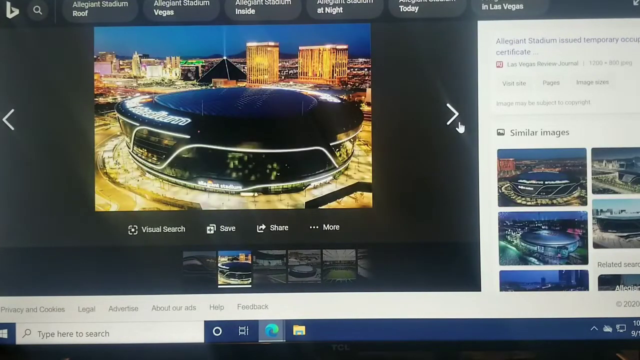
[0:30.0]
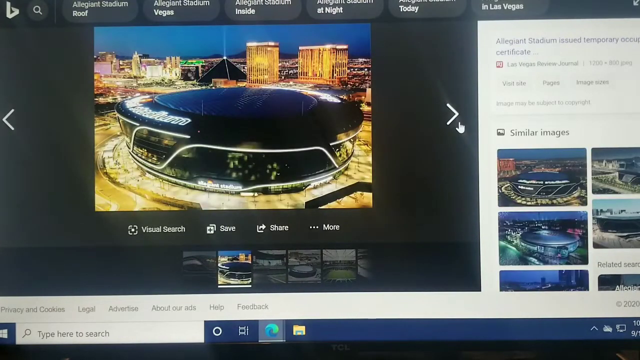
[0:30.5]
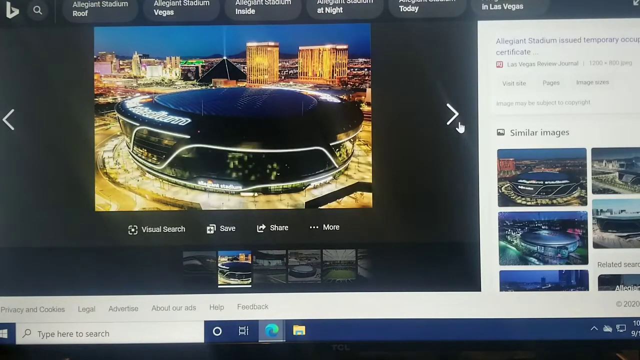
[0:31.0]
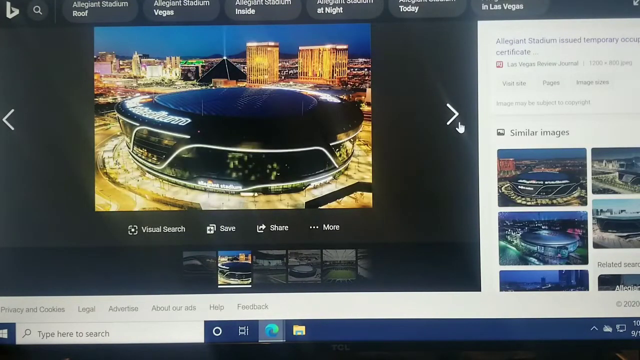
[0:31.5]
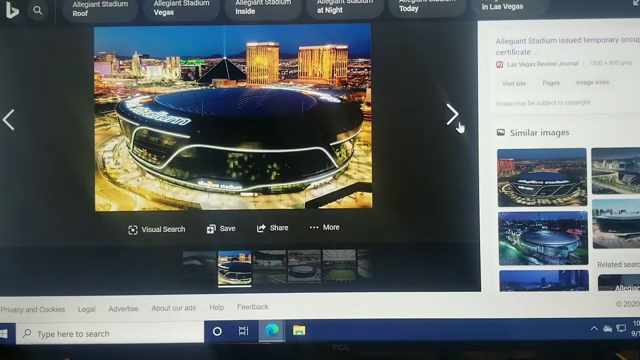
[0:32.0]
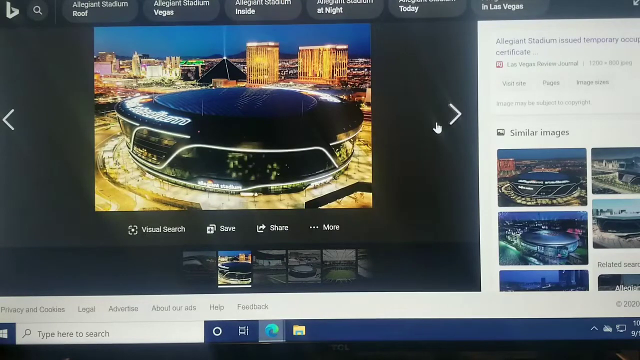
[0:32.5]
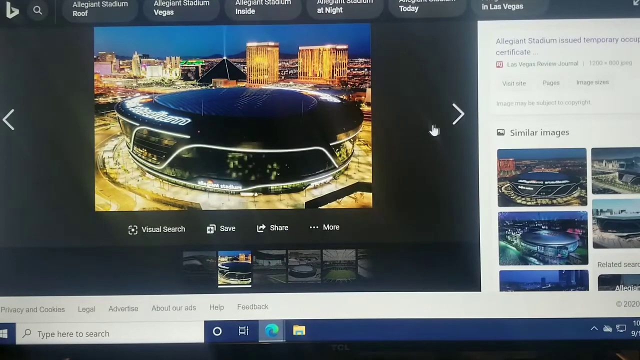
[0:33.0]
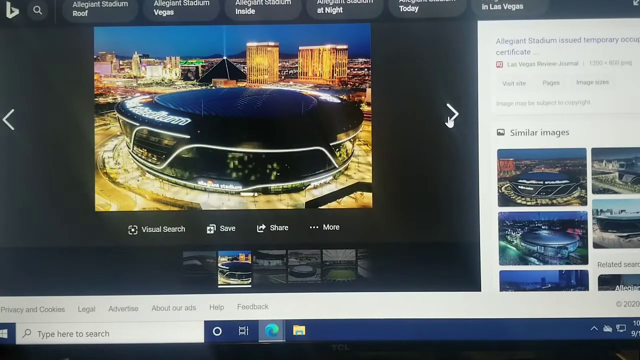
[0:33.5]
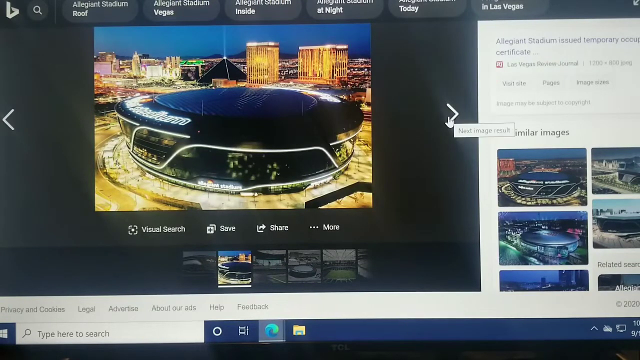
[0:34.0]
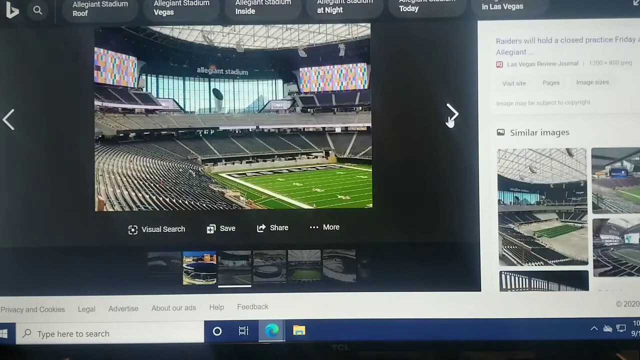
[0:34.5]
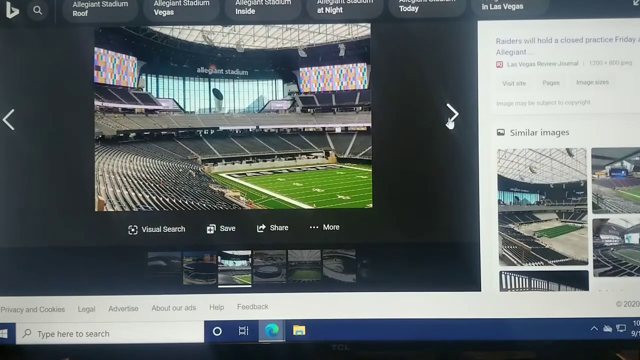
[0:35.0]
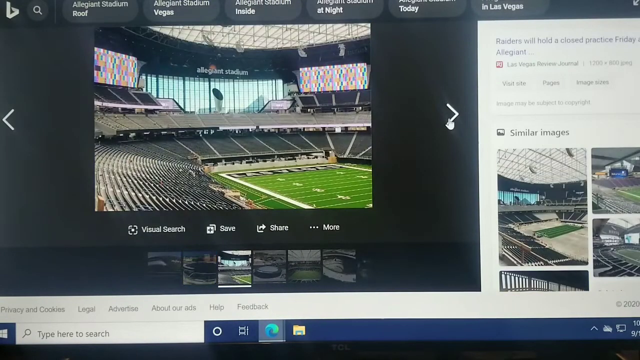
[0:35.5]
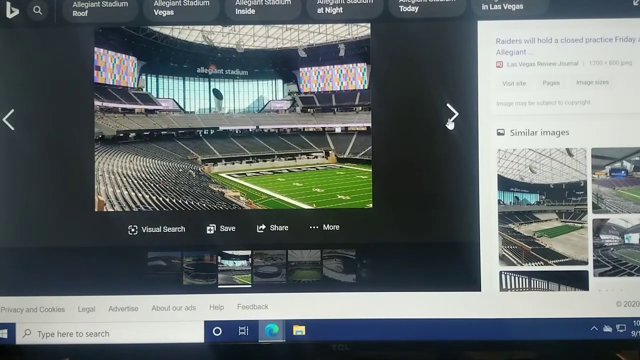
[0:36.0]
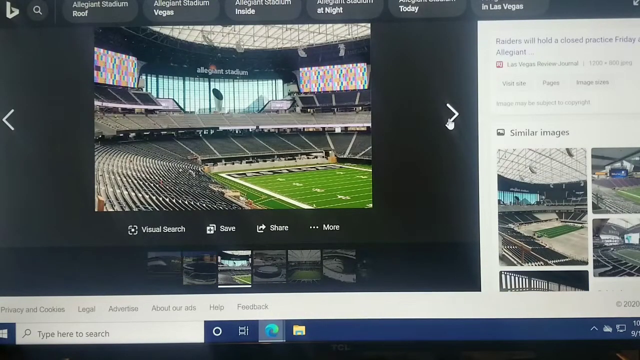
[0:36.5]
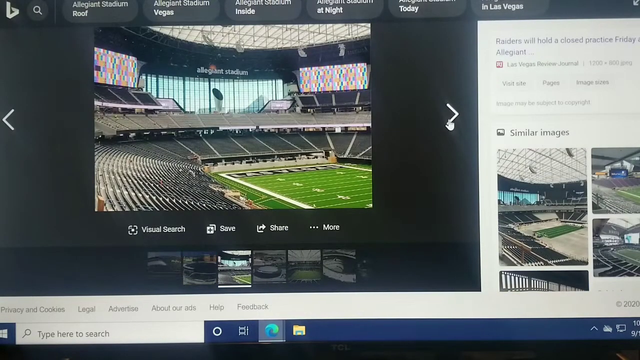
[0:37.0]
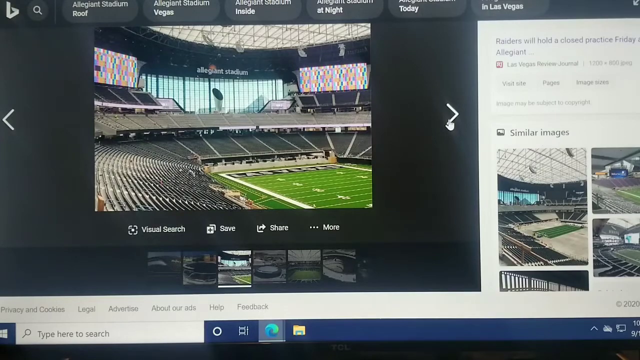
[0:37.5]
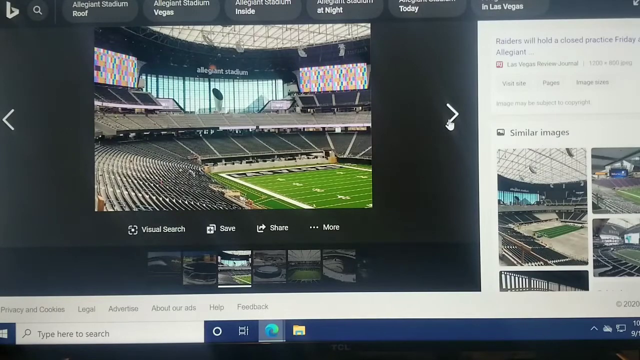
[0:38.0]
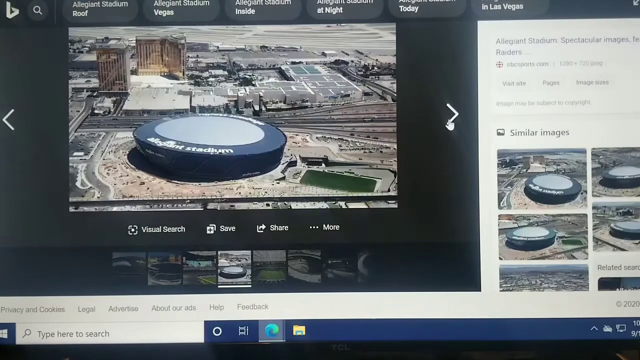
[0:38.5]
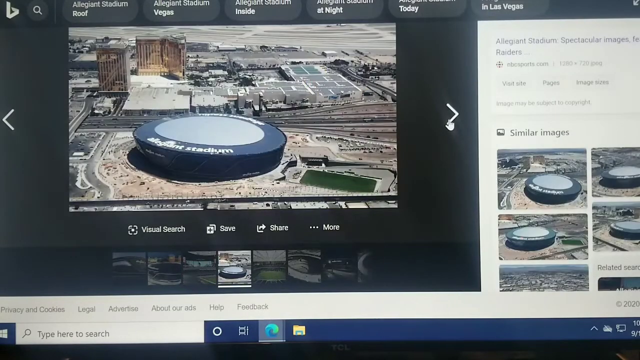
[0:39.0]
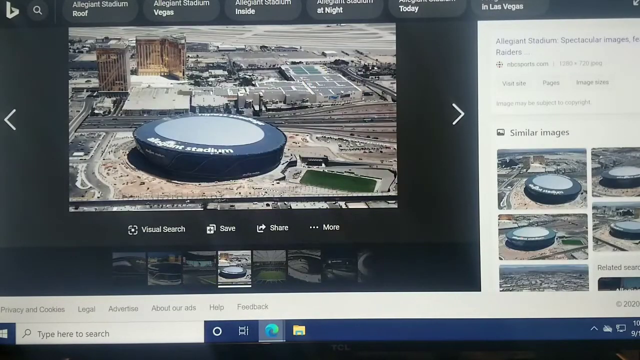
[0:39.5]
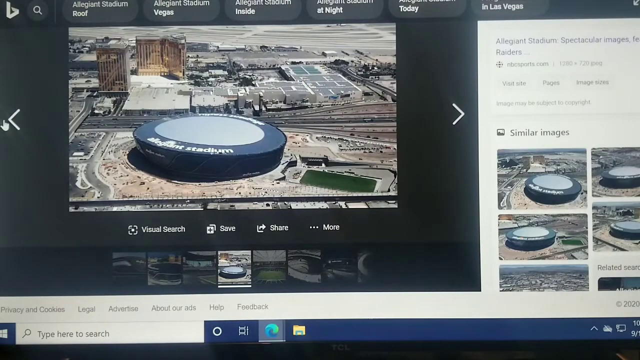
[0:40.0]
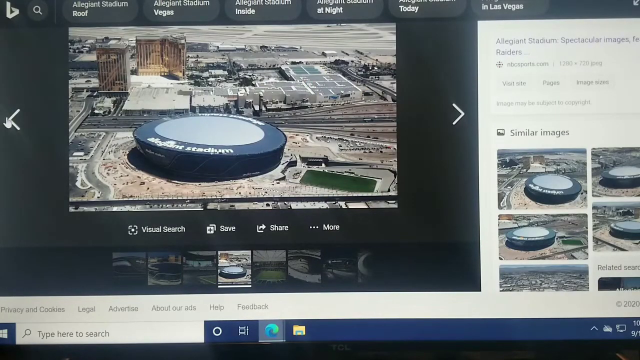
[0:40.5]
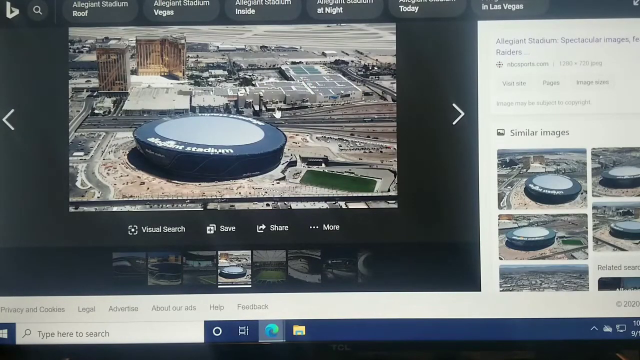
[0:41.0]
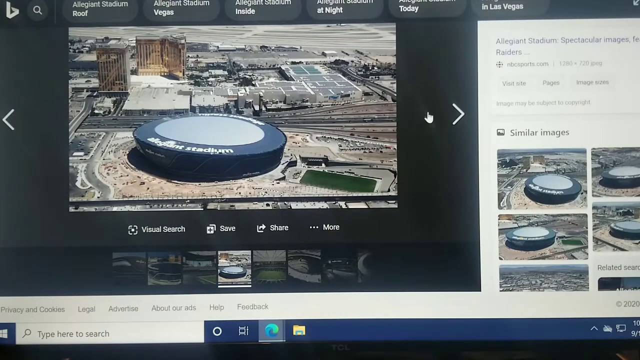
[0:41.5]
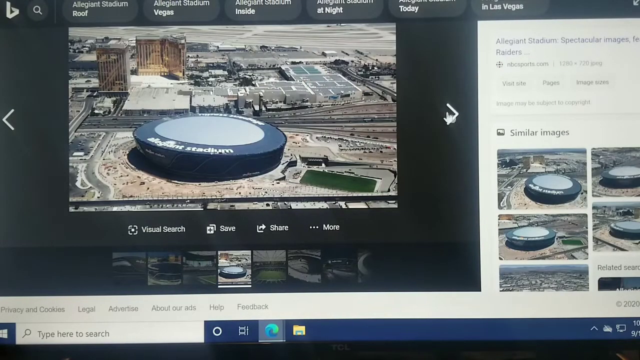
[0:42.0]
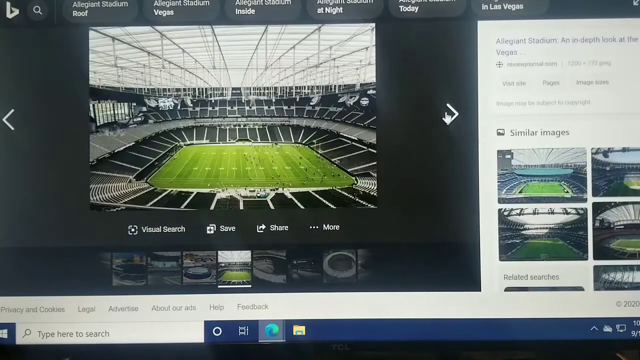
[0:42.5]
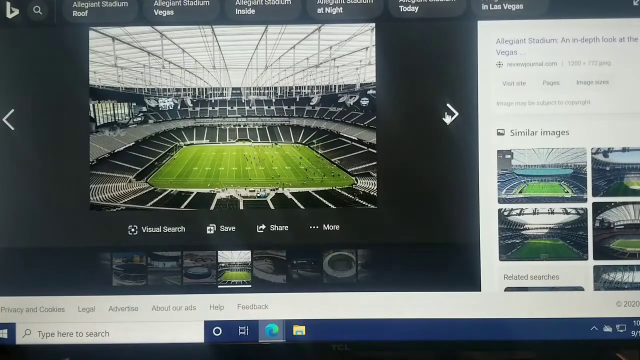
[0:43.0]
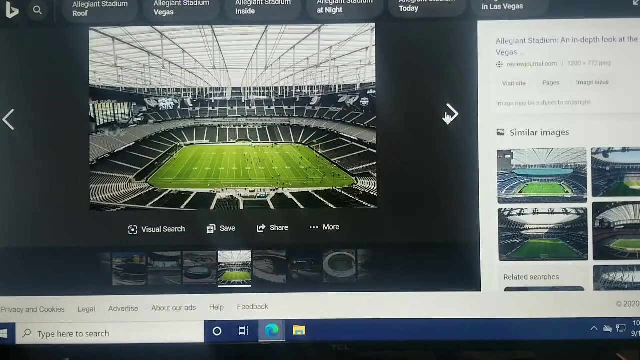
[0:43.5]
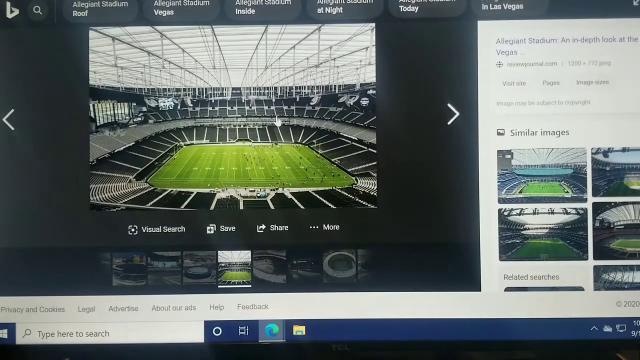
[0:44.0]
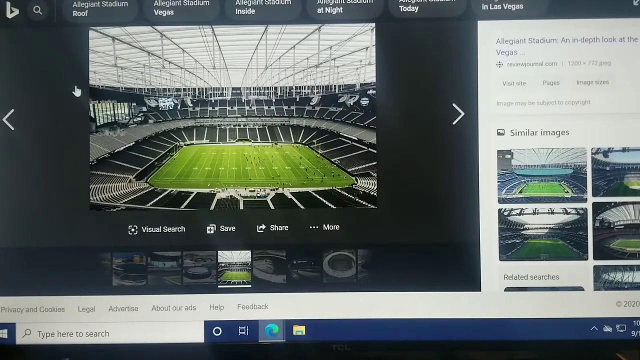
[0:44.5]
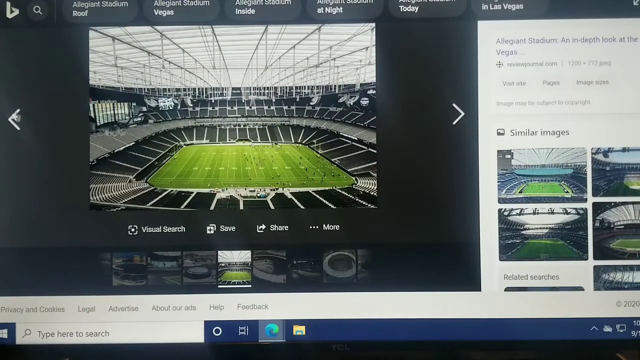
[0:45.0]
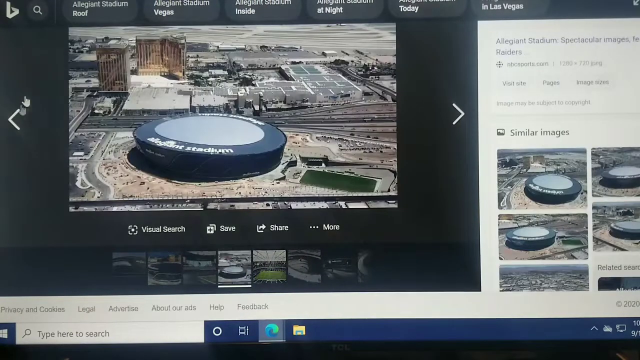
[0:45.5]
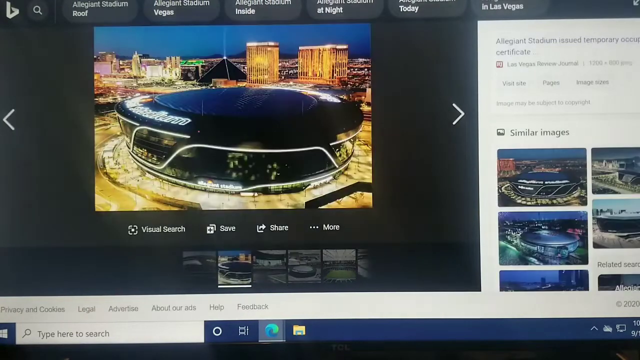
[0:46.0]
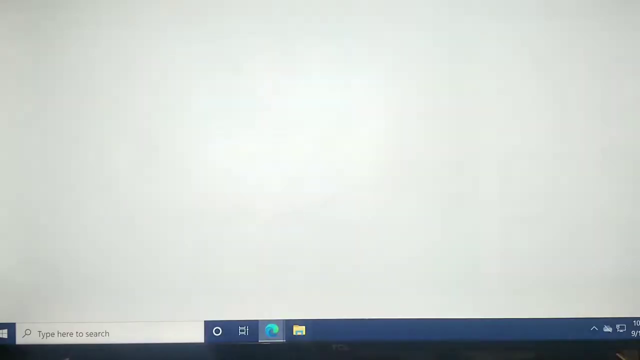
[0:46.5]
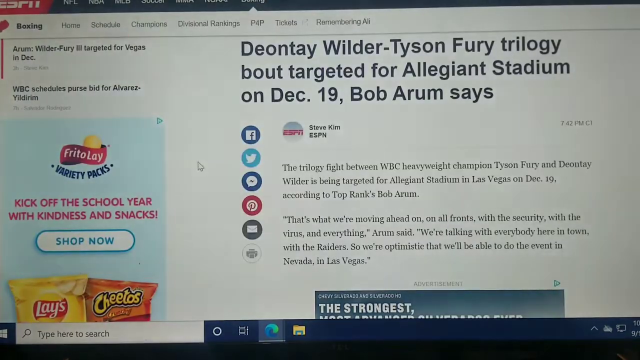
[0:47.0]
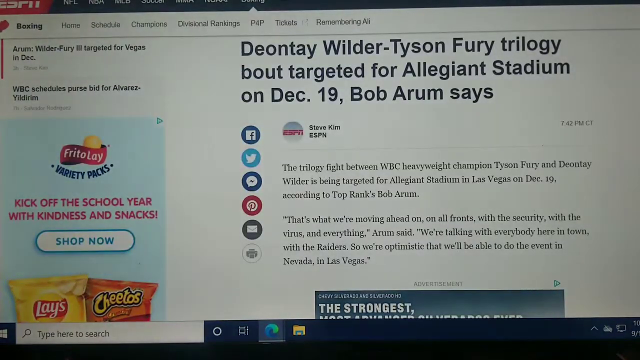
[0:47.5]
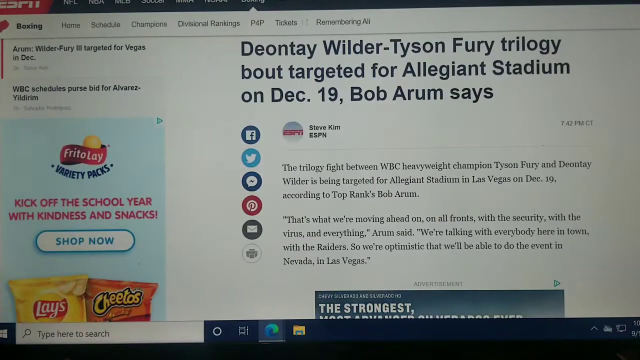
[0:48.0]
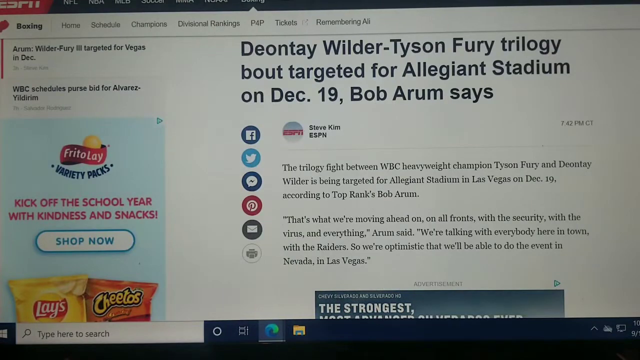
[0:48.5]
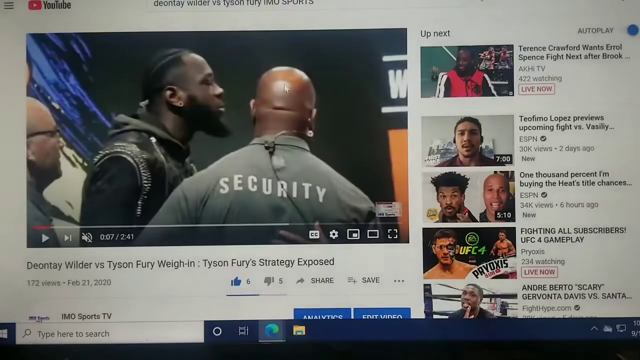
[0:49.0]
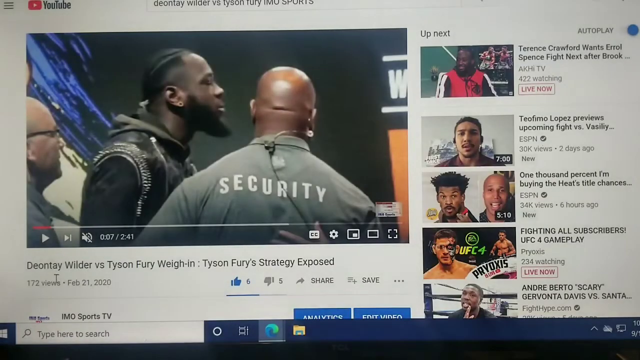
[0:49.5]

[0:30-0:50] A website shows a photo of Allegiant Stadium. A cursor hovers over the right arrow next to the photo, moves slightly to the left and then to the right, and then clicks right on the open mouth part of the right-facing arrow. The picture changes from the exterior of Allegiant Stadium to a photo of its interior. The picture lingers, then the cursor moves ever so slightly, clicking the right-facing arrow again, and another photo of Allegiant Stadium appears, this time outside the stadium from far up in the air, probably taken from an airplane or a drone. The cursor then makes a big swing across the page to the left arrow, then swings up and back to the right.